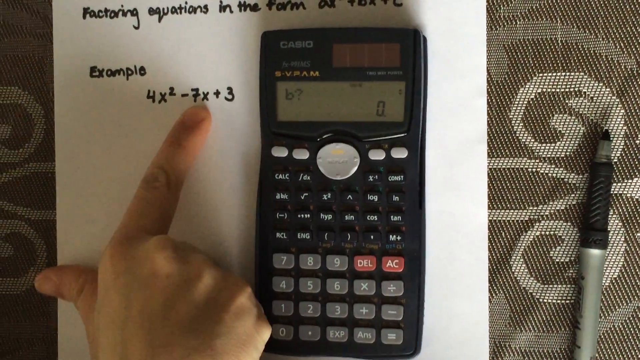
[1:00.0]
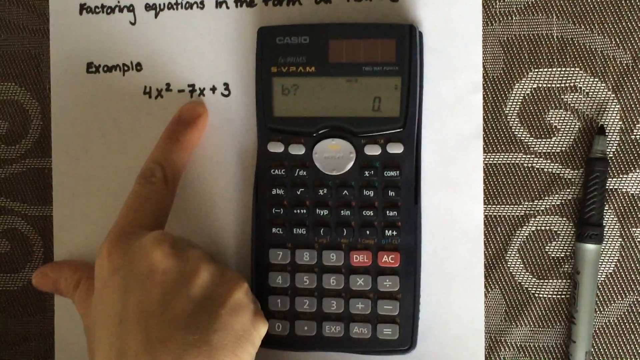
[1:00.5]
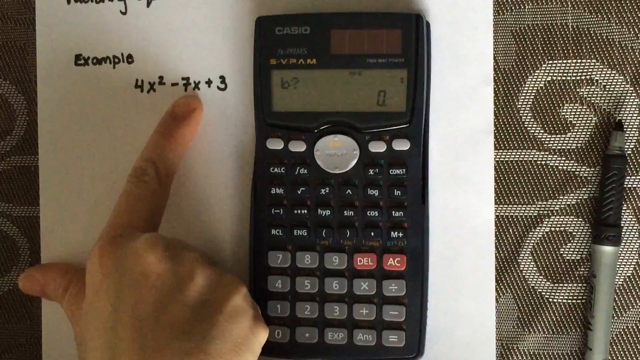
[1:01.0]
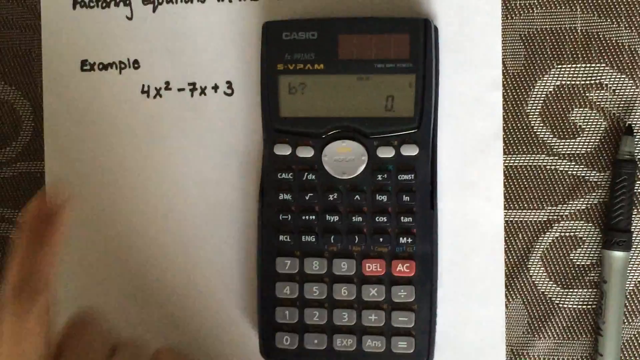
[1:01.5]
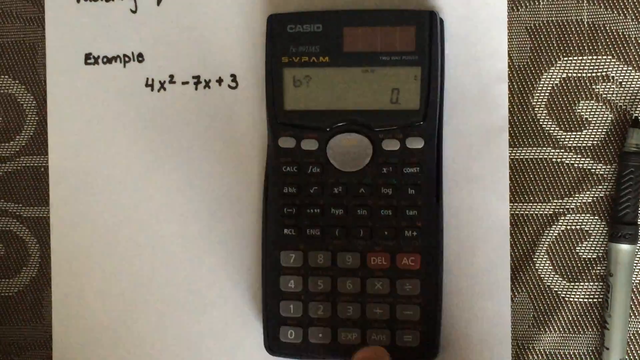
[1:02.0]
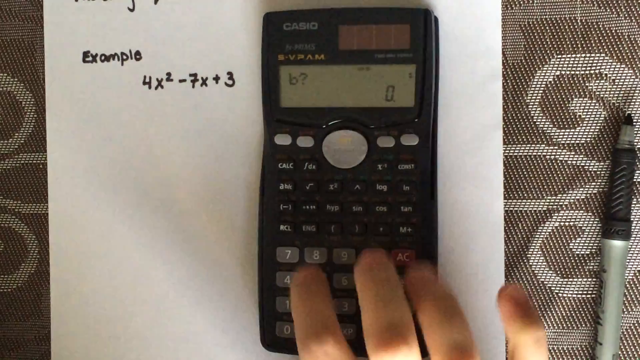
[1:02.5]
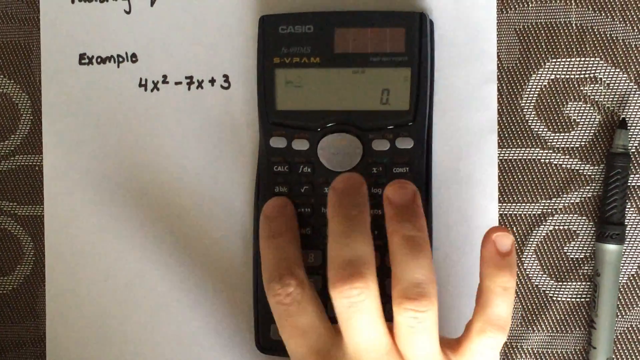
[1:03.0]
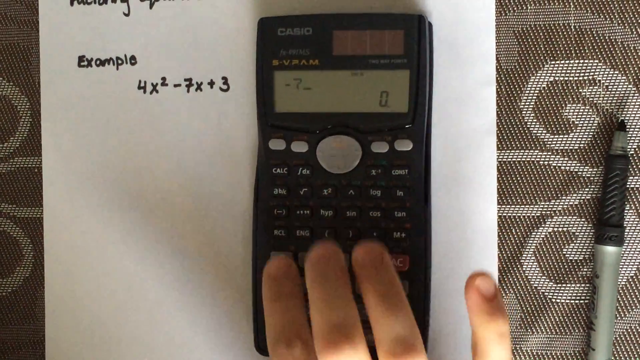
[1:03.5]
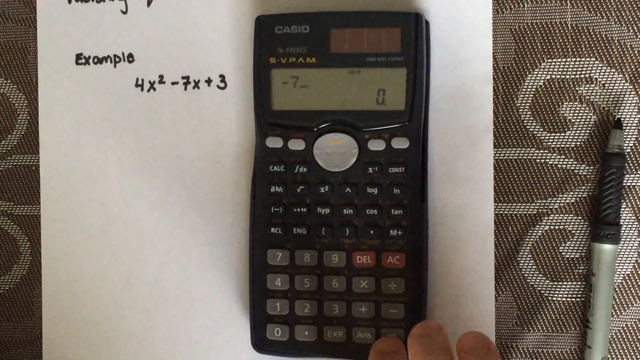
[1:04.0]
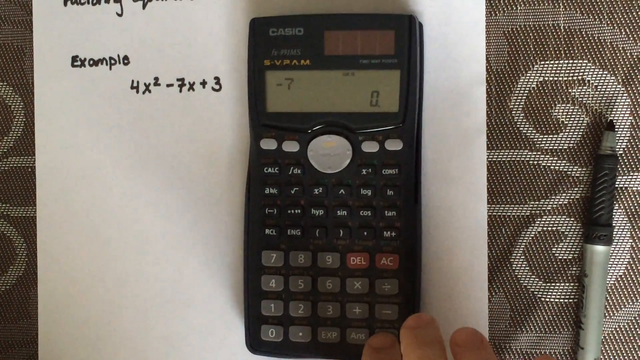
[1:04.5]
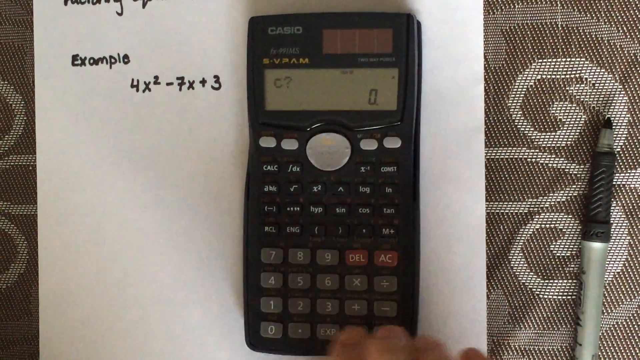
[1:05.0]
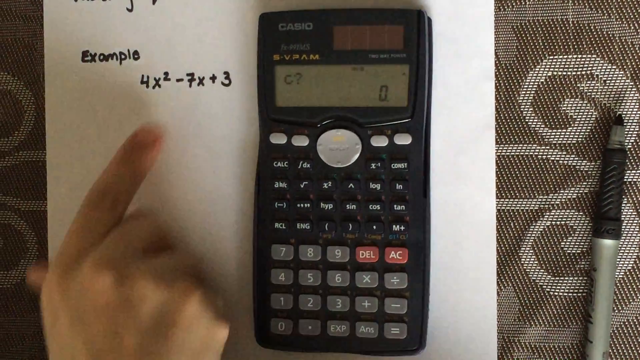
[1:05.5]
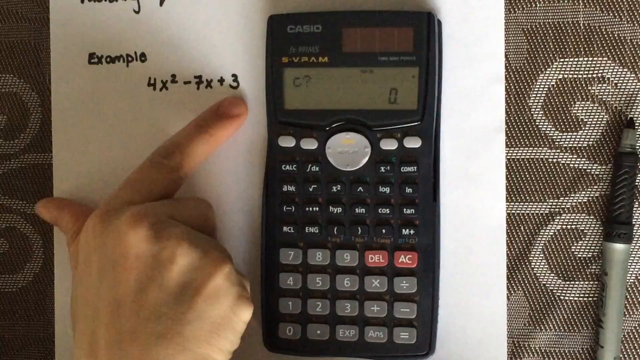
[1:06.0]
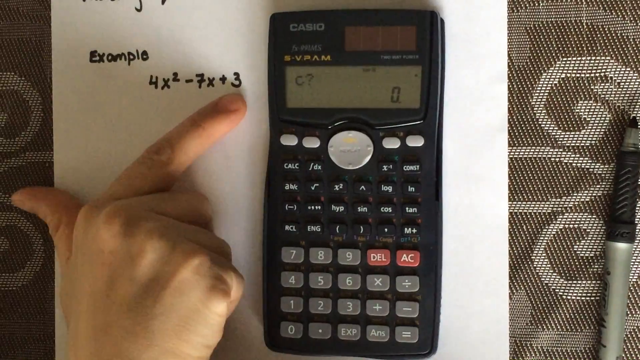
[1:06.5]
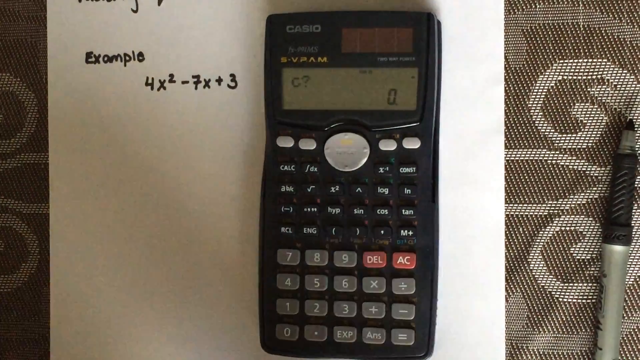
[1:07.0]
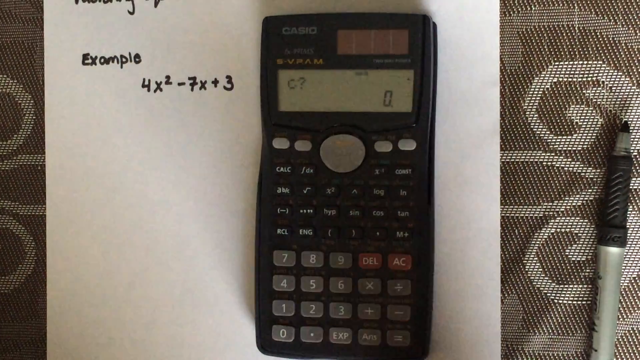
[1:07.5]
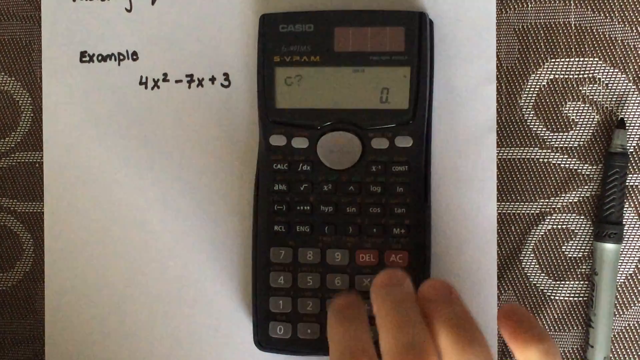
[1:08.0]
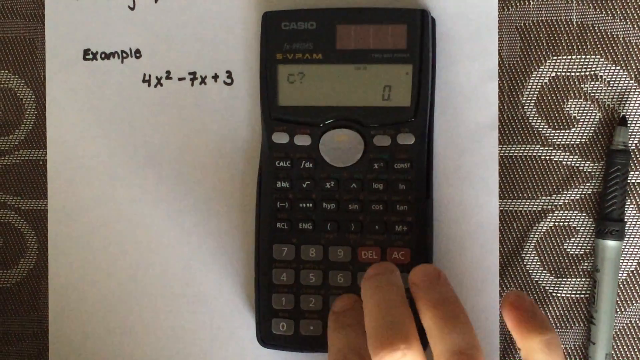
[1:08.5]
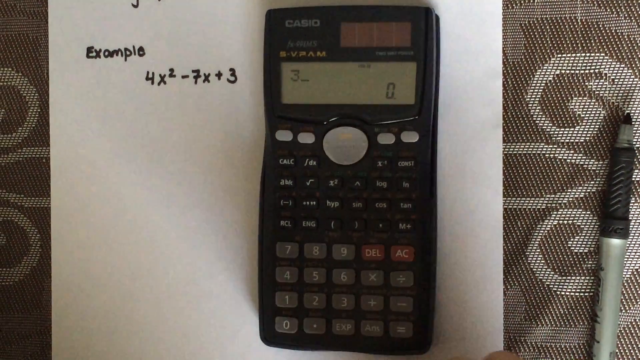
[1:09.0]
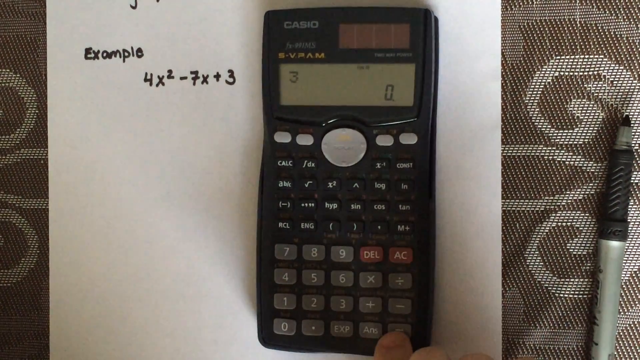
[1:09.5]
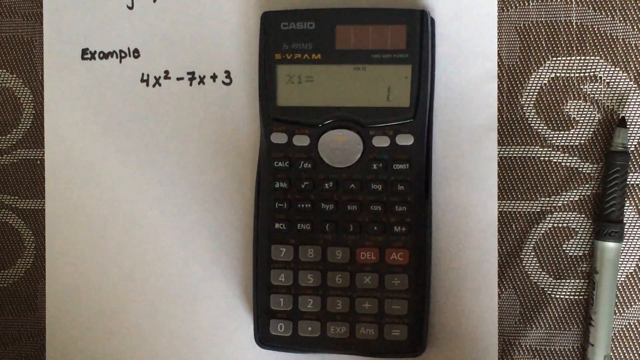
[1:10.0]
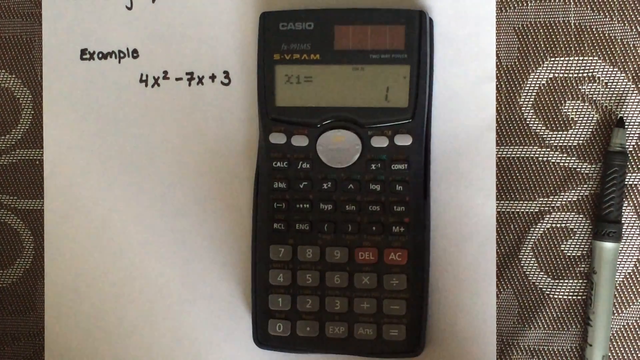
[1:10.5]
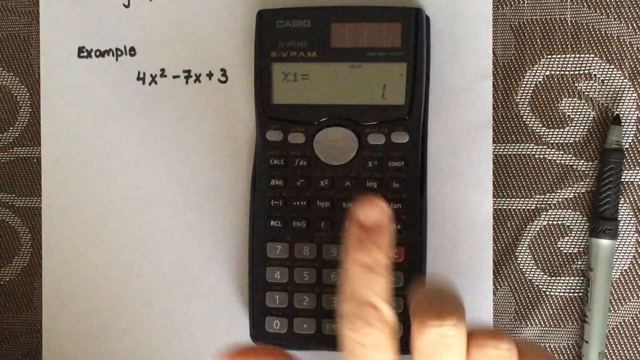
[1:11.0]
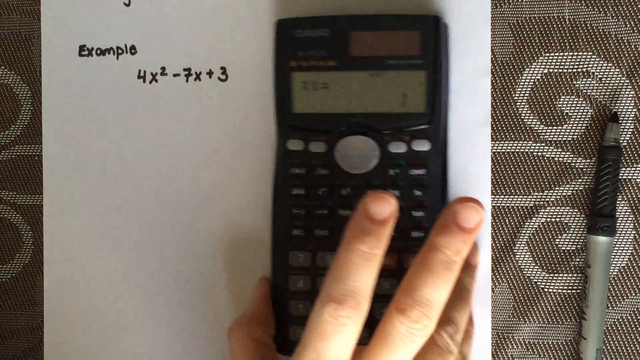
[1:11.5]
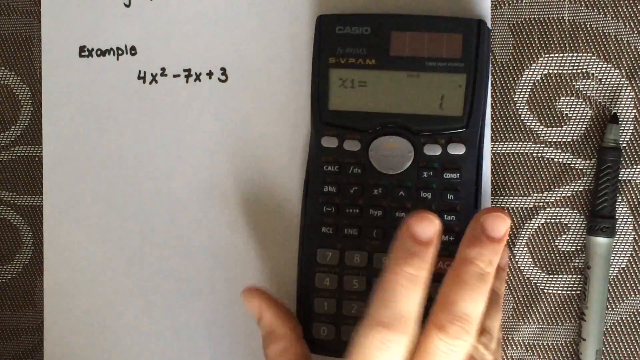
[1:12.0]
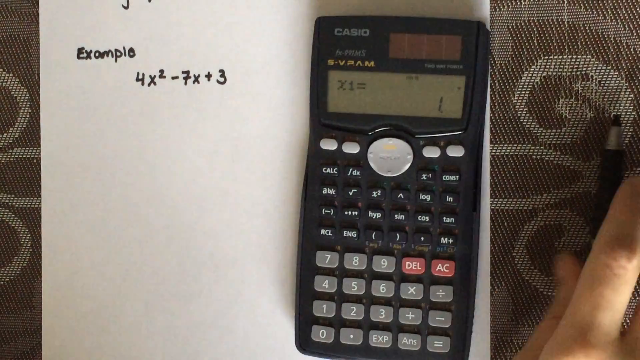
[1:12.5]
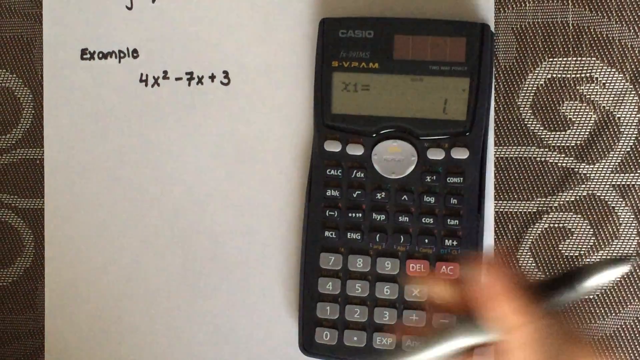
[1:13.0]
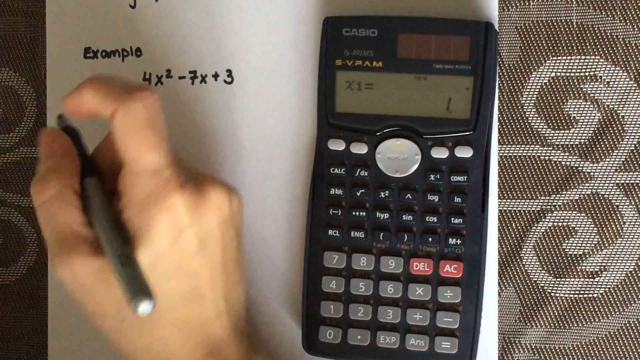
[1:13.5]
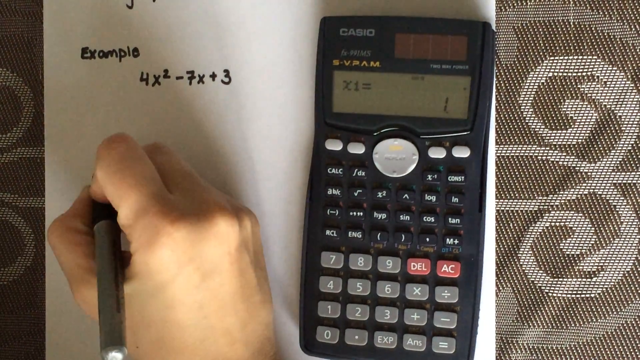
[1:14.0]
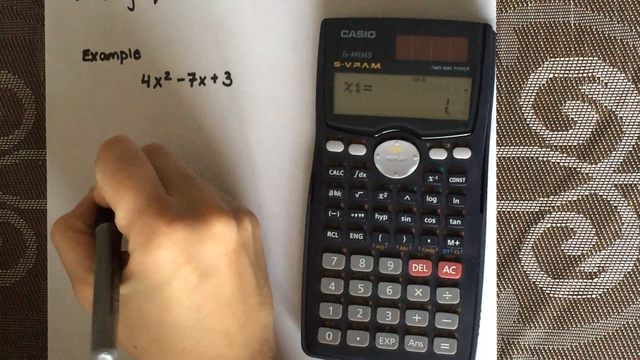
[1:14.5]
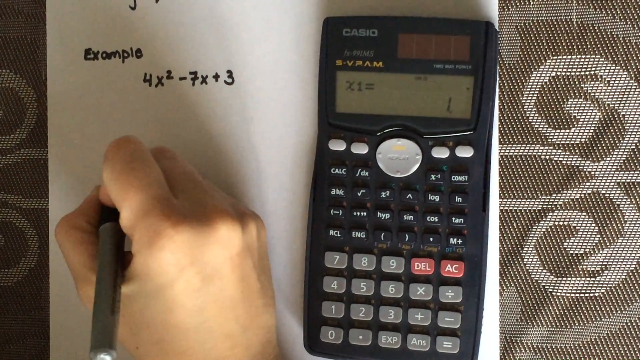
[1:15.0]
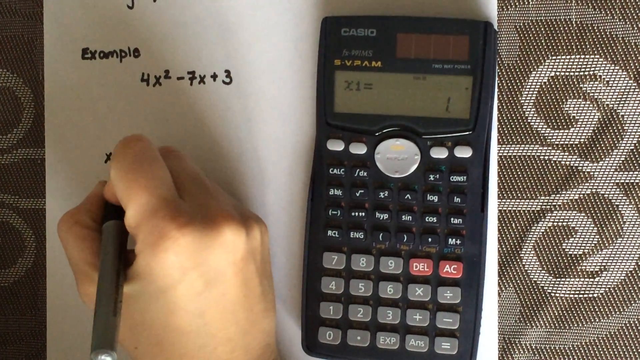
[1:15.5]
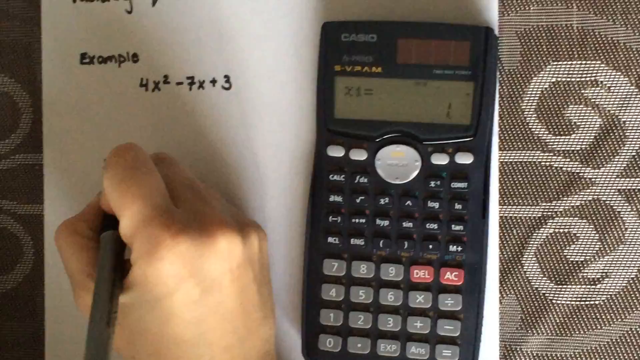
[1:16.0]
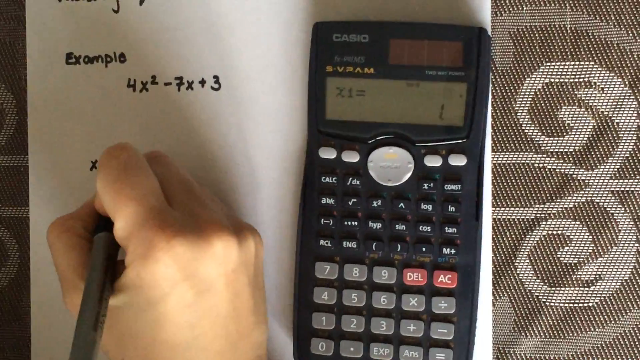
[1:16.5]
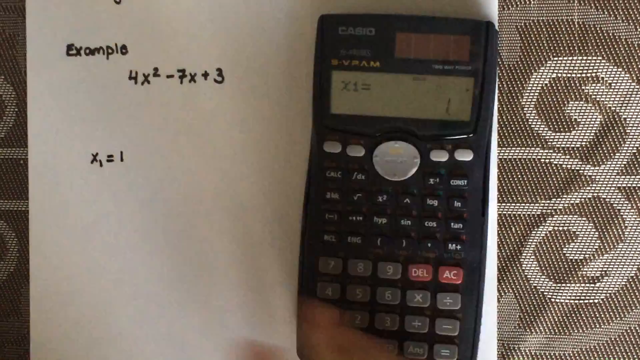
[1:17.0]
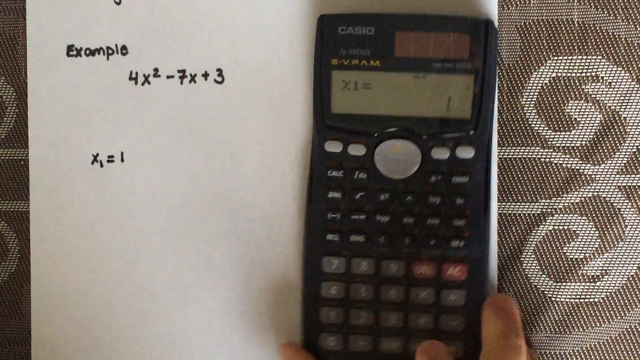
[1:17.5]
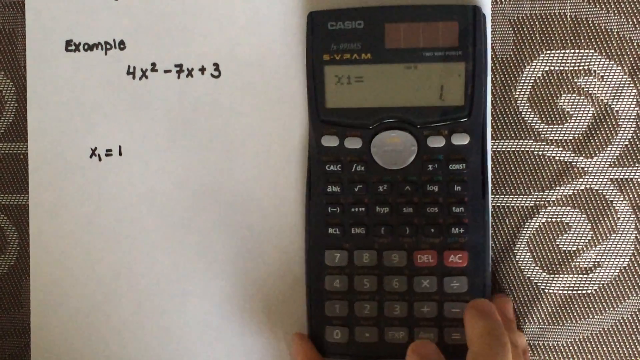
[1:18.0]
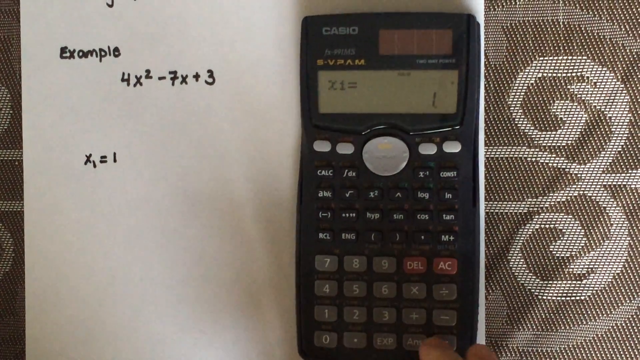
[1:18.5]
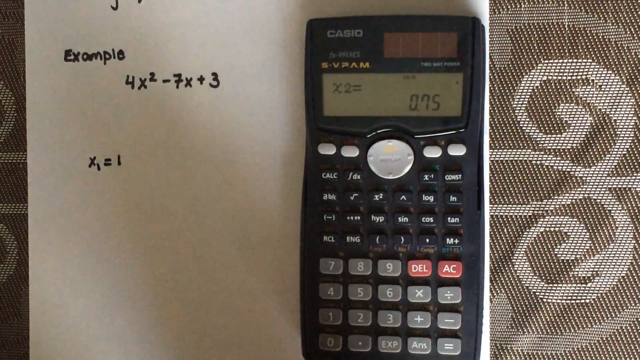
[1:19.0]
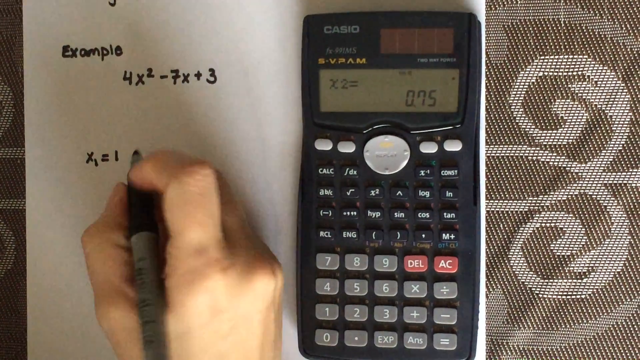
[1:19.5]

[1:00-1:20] The paper shows the example written in black ink. The calculator has a green screen that says x1 equals 1, and the person writes x1 equals 1 on the paper, then also writes 0.75, which later shows up on the calculator as well. The person is Caucasian, with a white hand, and uses his index finger to point to various variables in the equation. A sofa with a symmetrical pattern is in the background. The scene is well lit, with daylight in the background, so everything can be read clearly, including the symbols on the calculator buttons.